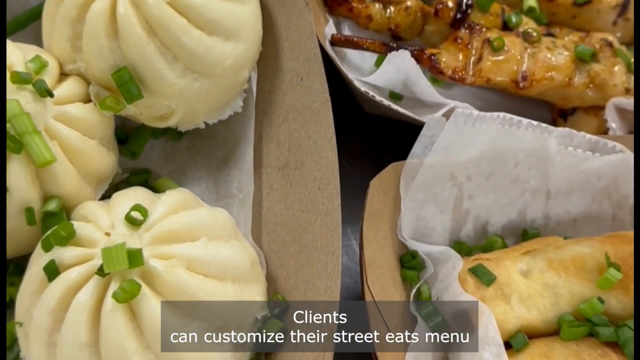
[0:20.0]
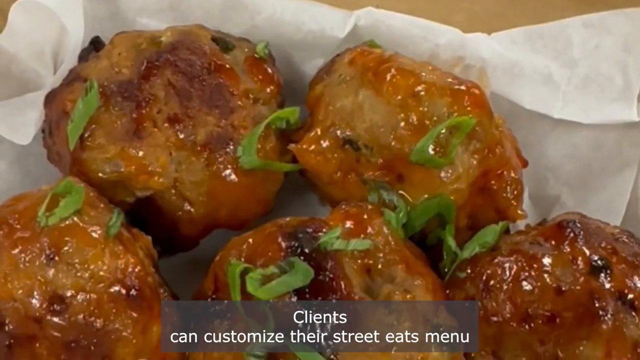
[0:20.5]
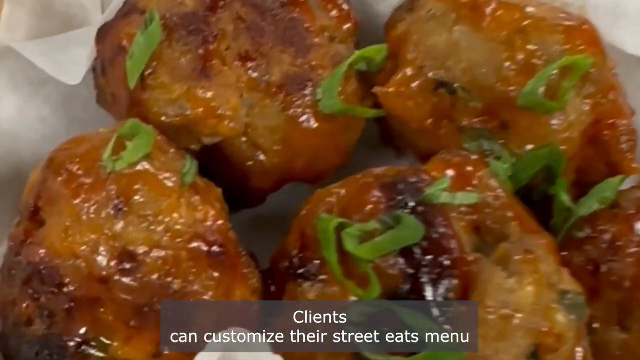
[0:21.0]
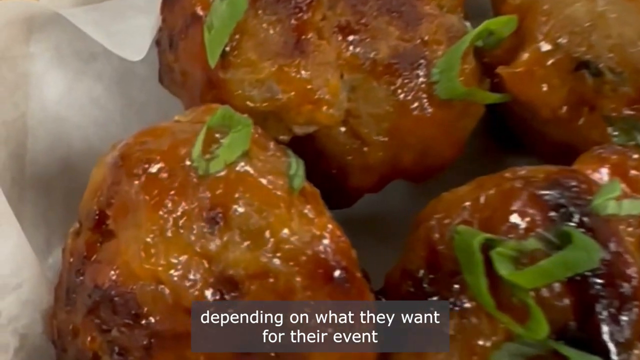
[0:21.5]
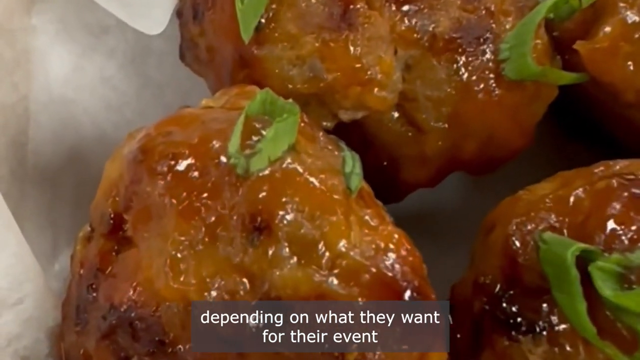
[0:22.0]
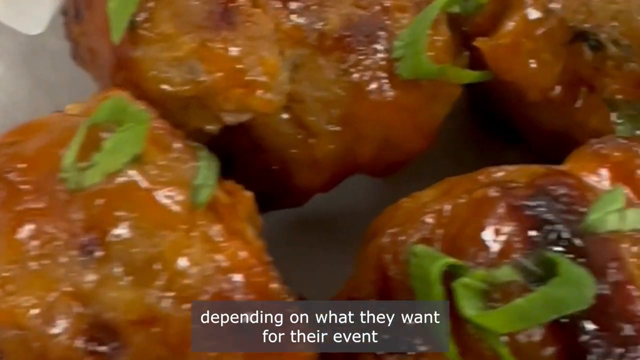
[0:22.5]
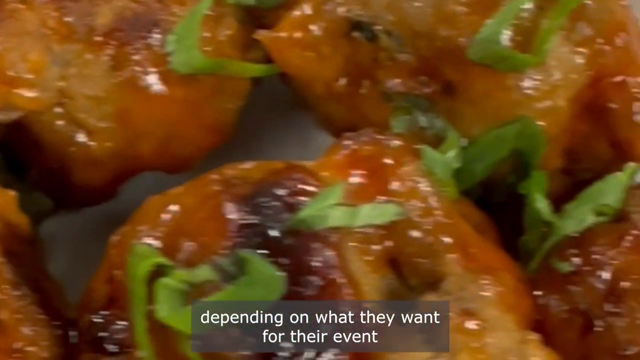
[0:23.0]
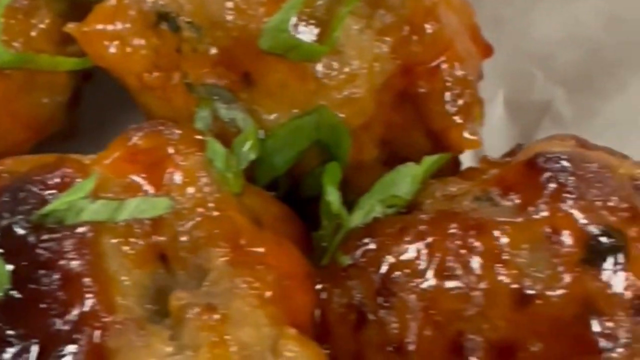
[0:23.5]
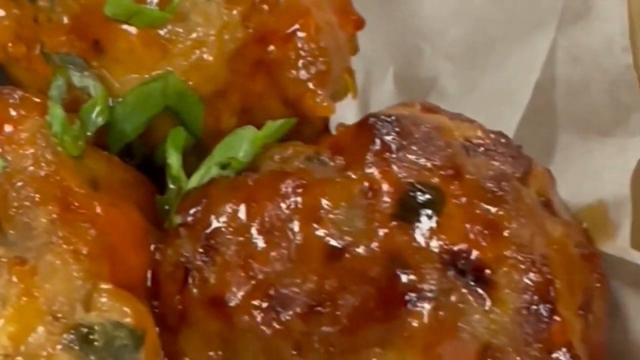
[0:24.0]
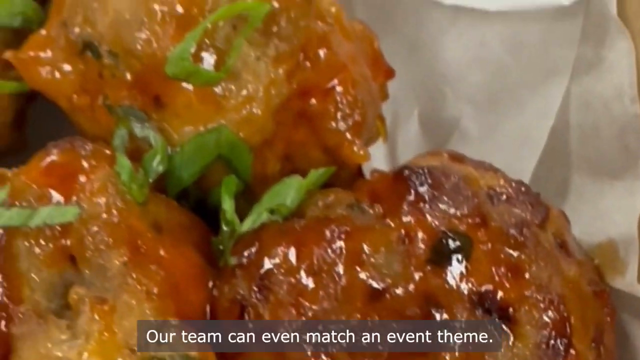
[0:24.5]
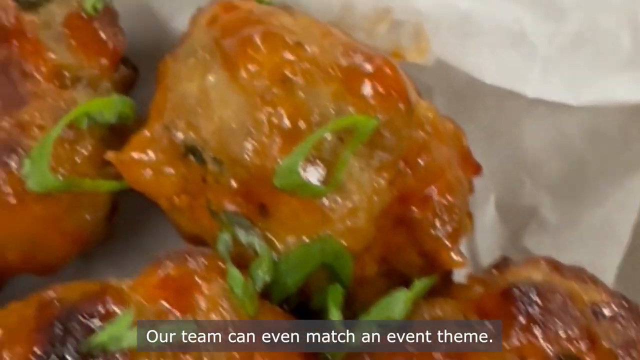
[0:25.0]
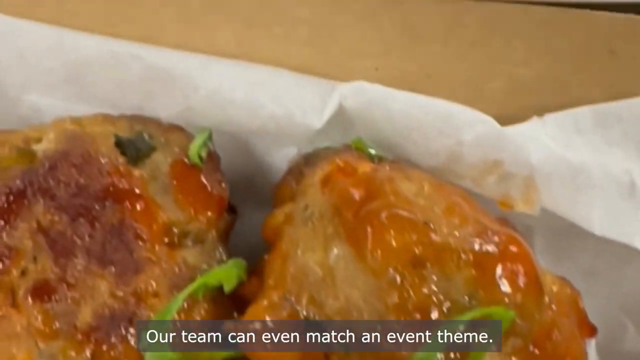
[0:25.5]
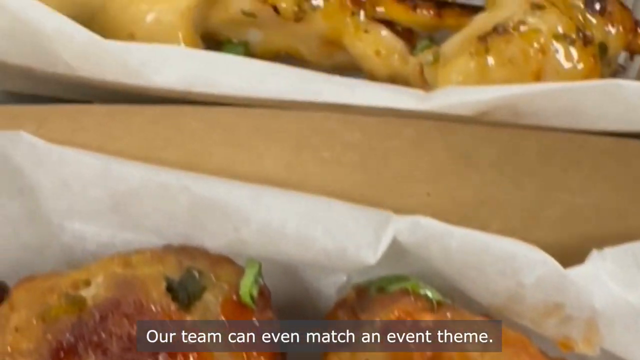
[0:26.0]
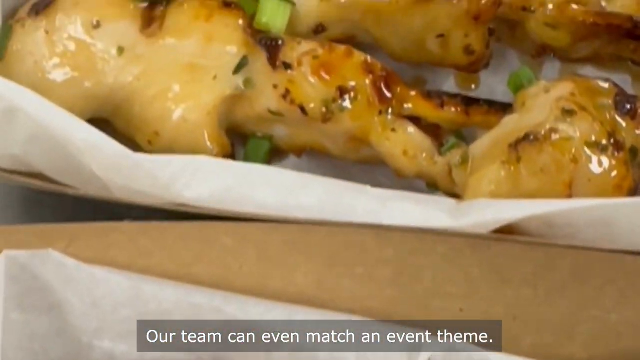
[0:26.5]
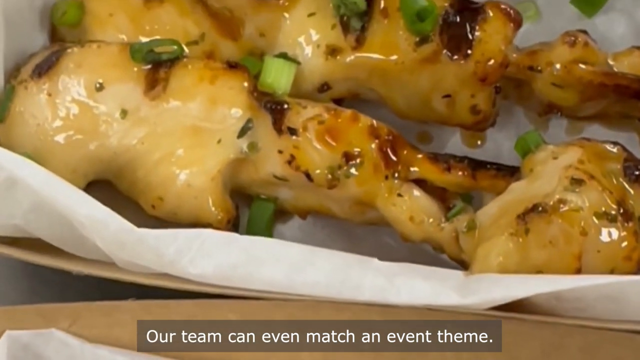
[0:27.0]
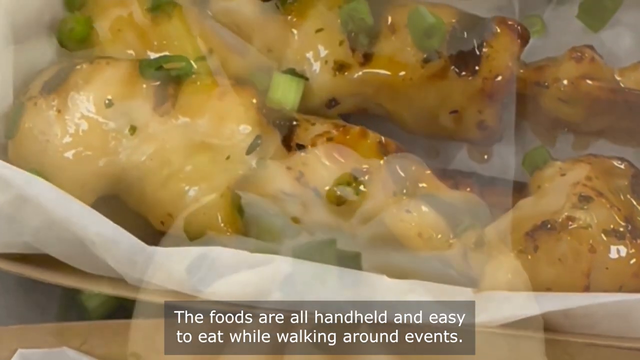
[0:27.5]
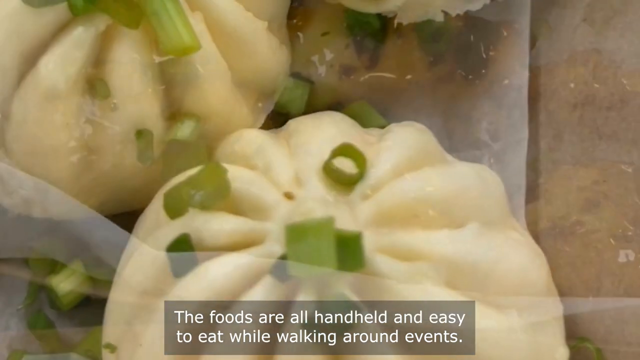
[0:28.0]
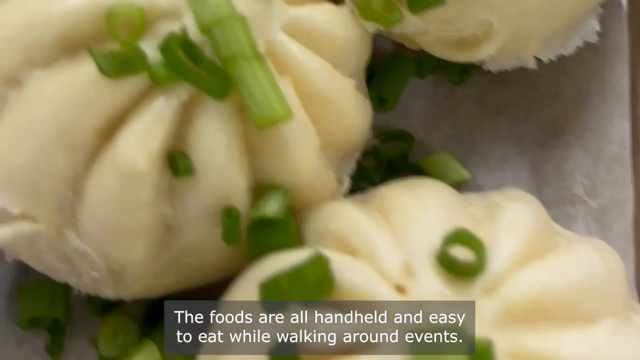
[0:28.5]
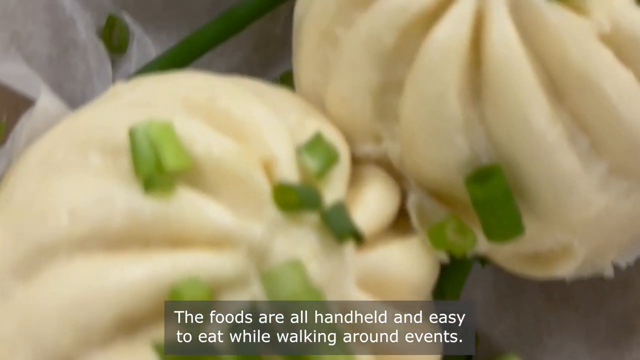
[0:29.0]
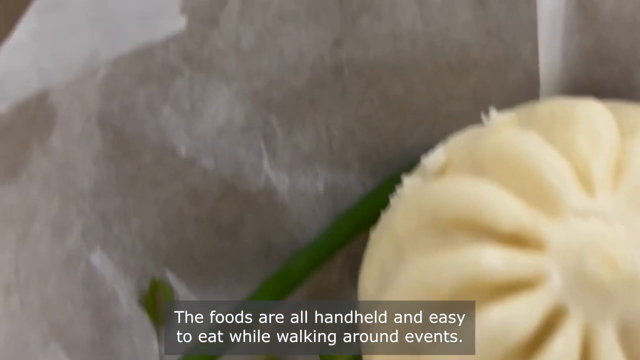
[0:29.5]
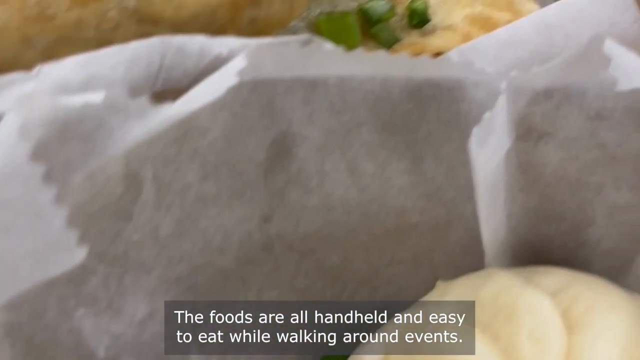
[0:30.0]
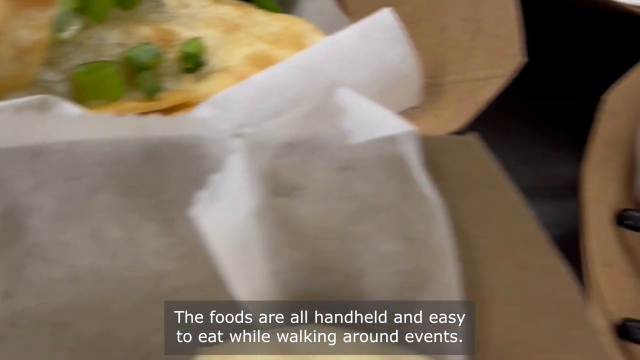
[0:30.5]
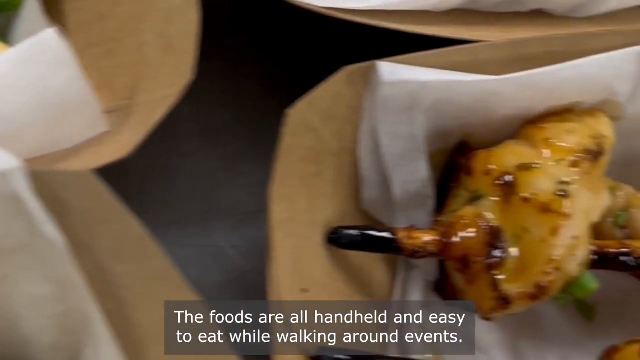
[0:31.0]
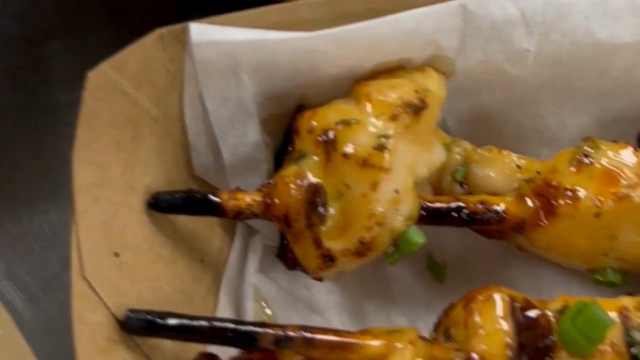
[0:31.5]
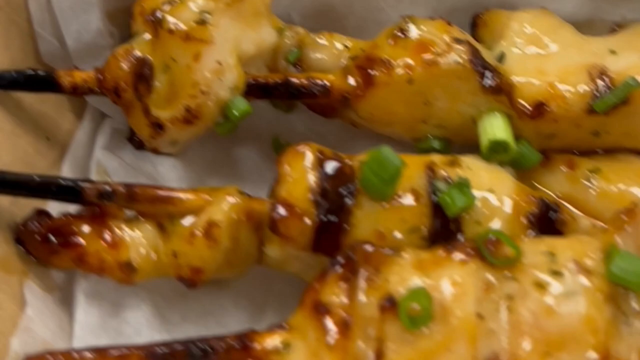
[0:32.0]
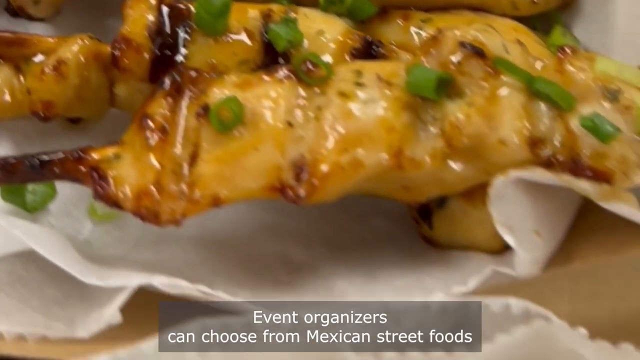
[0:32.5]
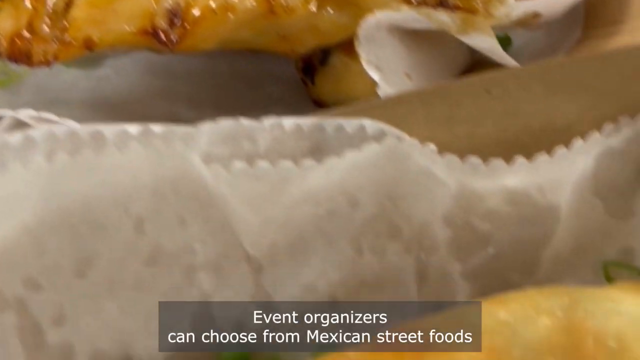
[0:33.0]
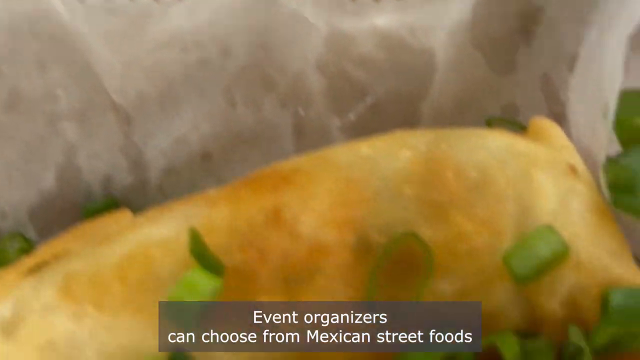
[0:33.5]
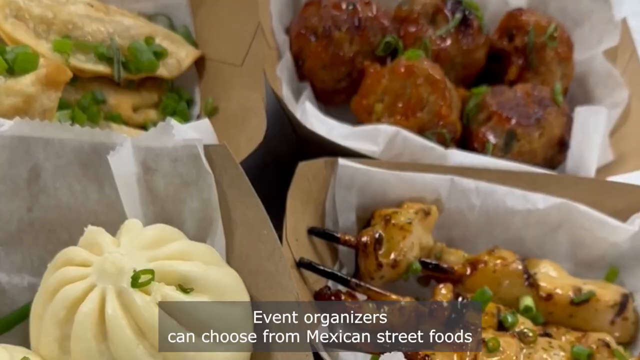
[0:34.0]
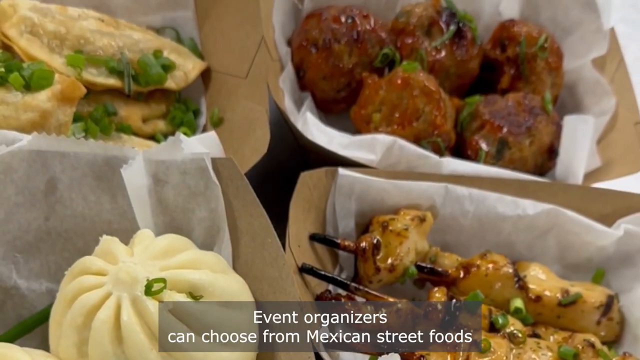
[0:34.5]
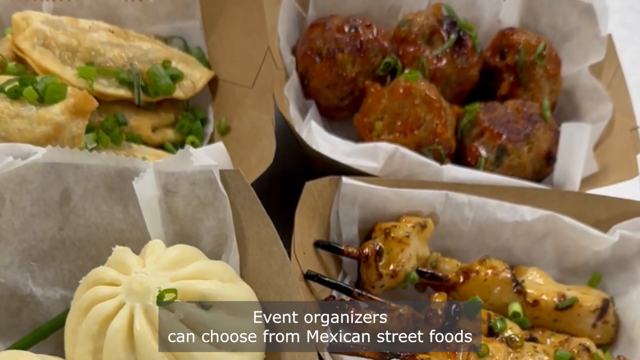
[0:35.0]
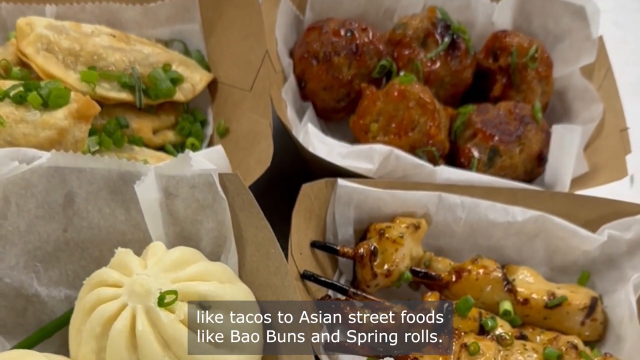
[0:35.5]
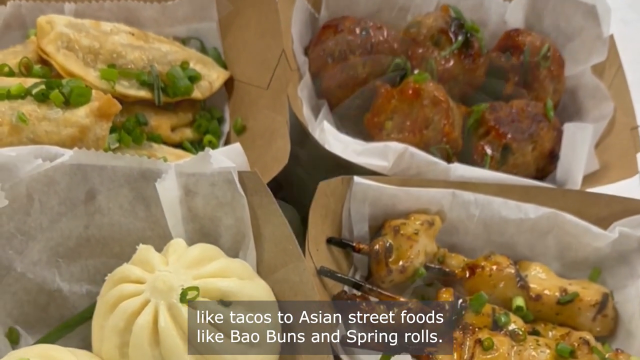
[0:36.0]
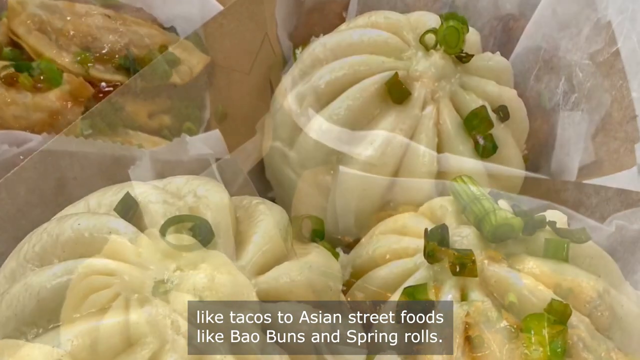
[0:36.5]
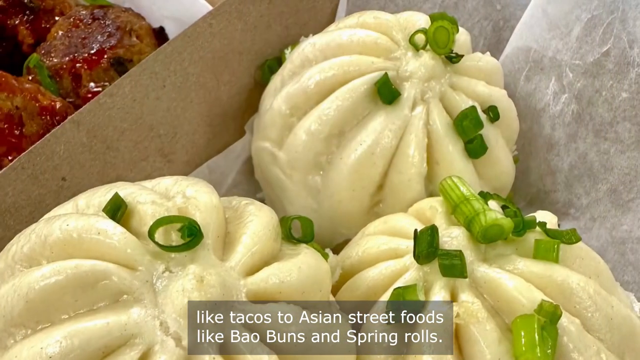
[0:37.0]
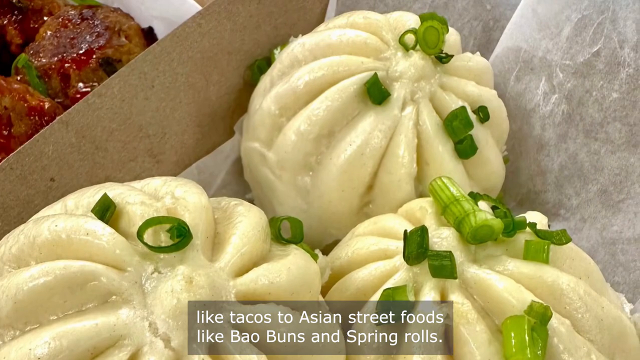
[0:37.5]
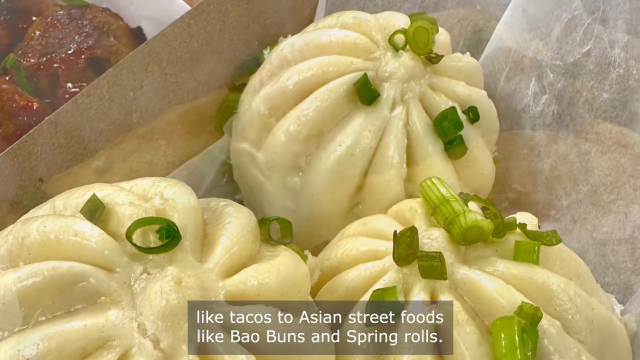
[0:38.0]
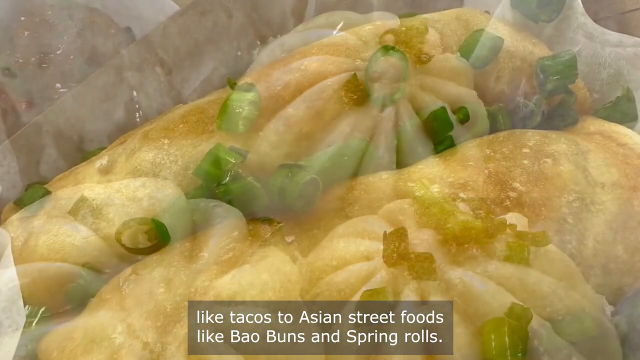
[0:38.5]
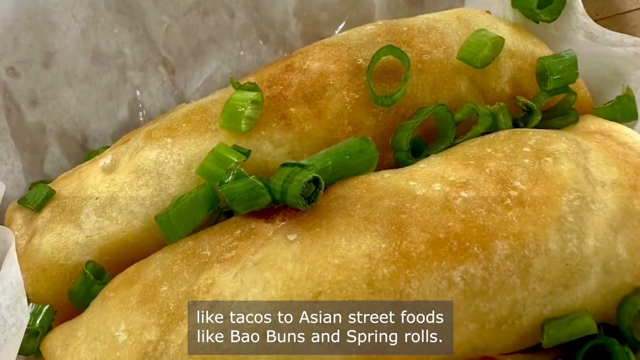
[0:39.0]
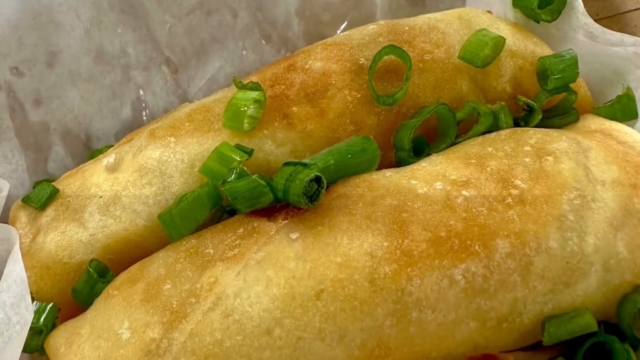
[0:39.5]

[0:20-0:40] A close-up shows what looks like meatballs, followed by the skewers and then the buns. Text appears beneath the images, mentioning a beverage provider at Tampa Convention Center and that clients can customize their Street Eats menu for their event. It continues: "Our team can even match an event theme." The text states that the foods are handheld and easily eaten, and then: "Event organizers can choose from Mexican street foods like tacos to Asian street foods like bao buns and spring rolls." While the text plays, different close-ups of the foods appear in great detail, including the bao buns and satay. At times the camera zooms in very close, then cuts far back.